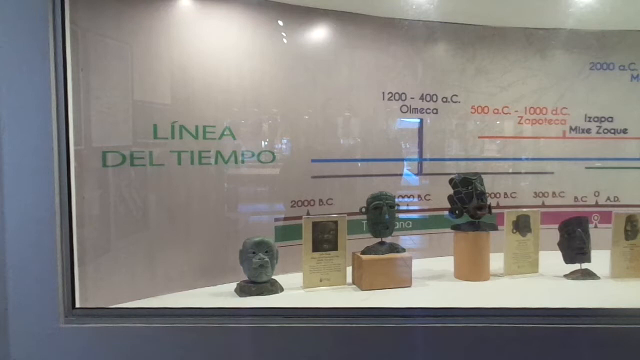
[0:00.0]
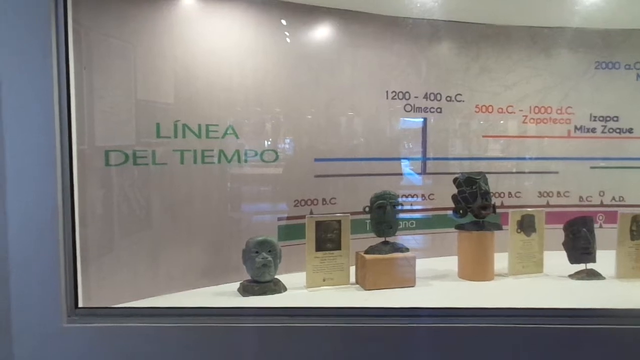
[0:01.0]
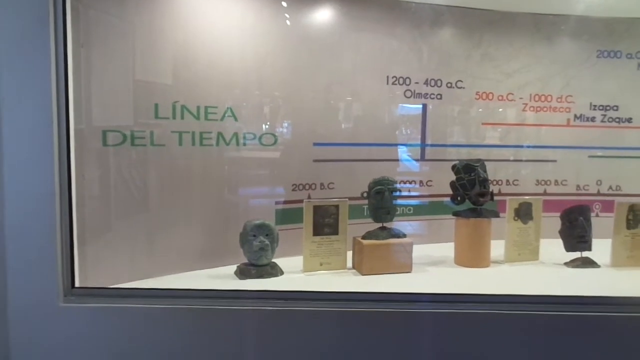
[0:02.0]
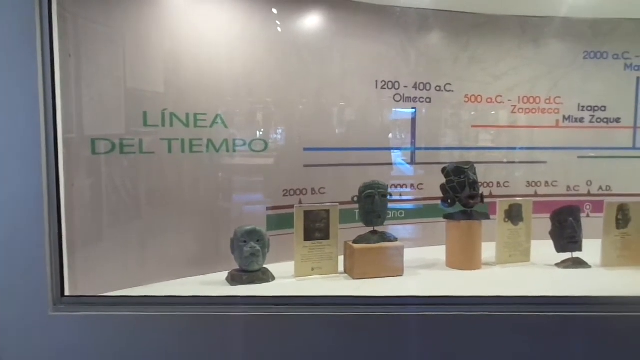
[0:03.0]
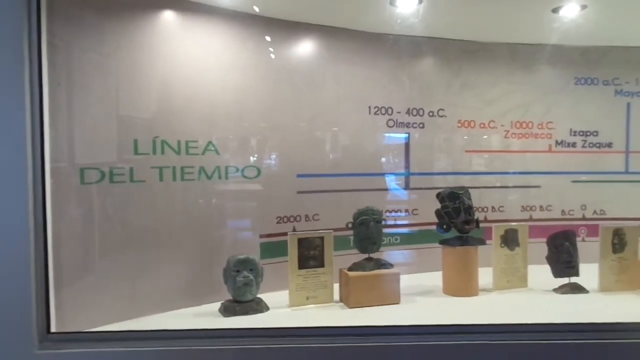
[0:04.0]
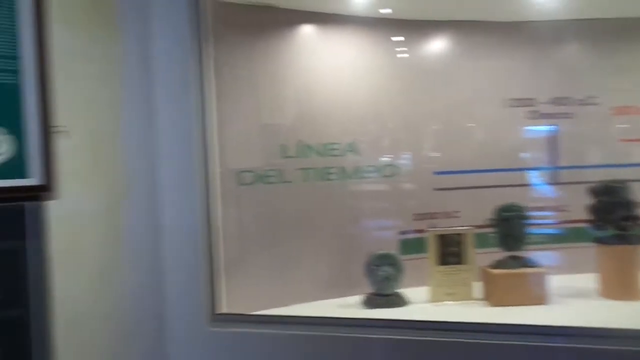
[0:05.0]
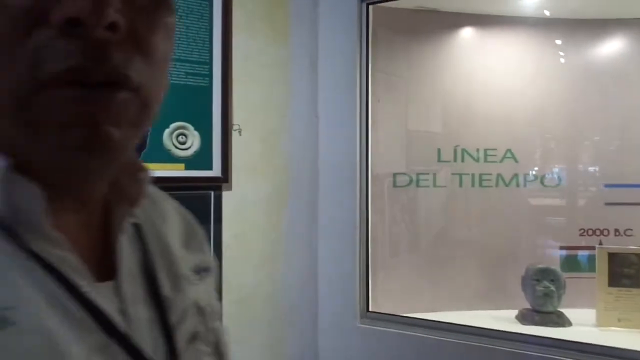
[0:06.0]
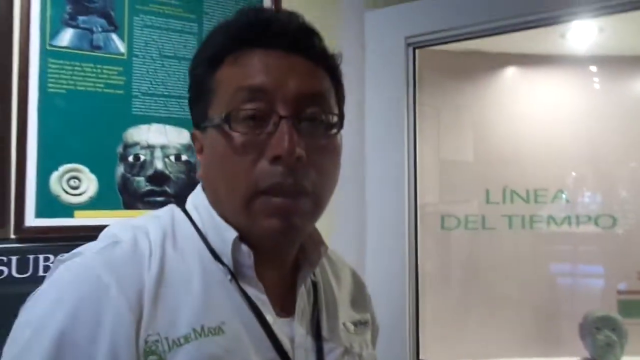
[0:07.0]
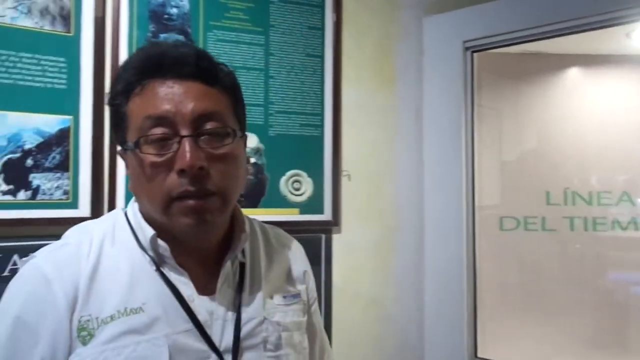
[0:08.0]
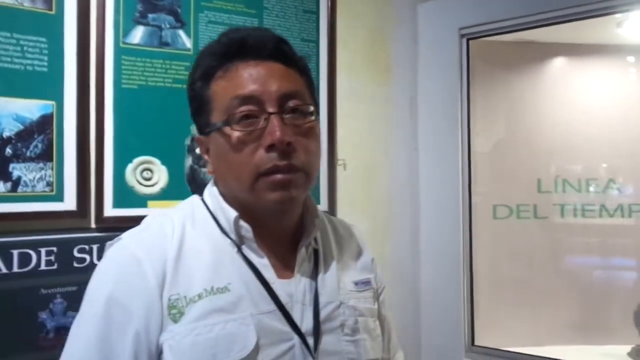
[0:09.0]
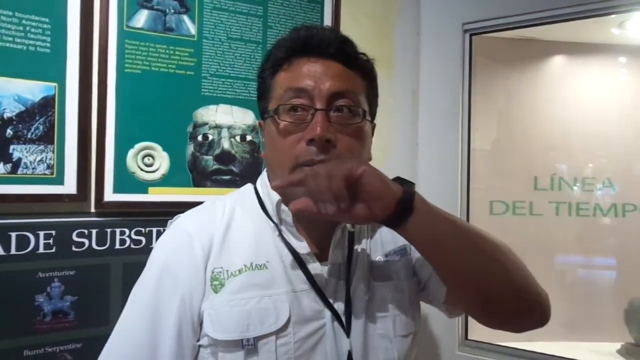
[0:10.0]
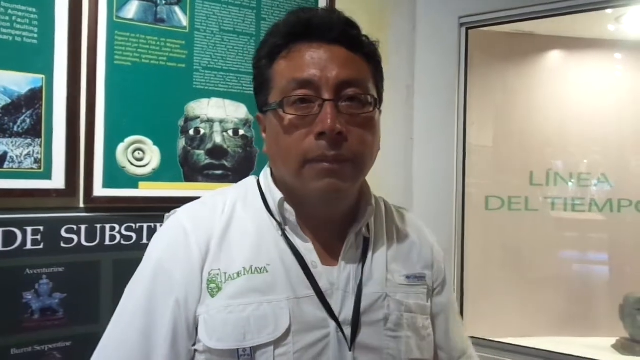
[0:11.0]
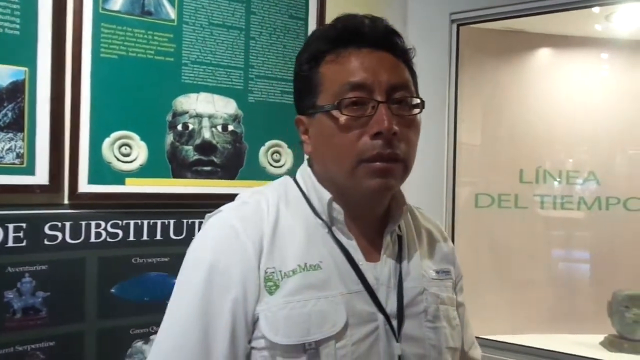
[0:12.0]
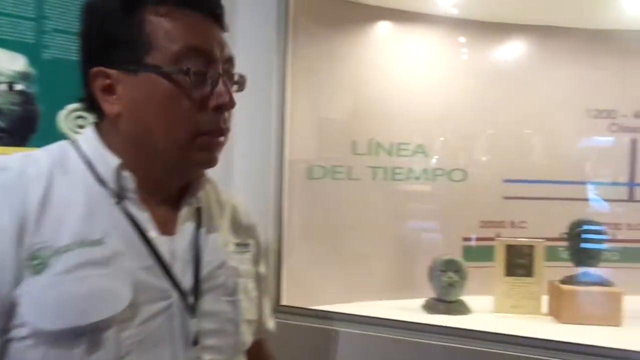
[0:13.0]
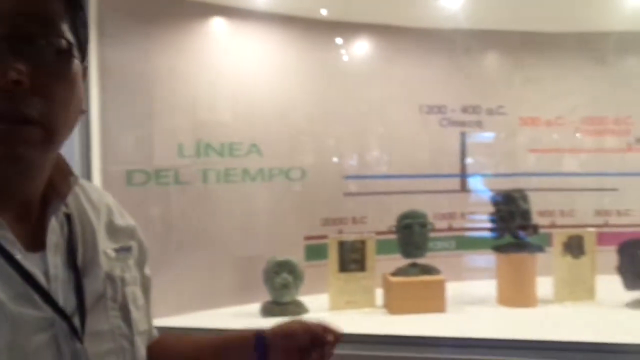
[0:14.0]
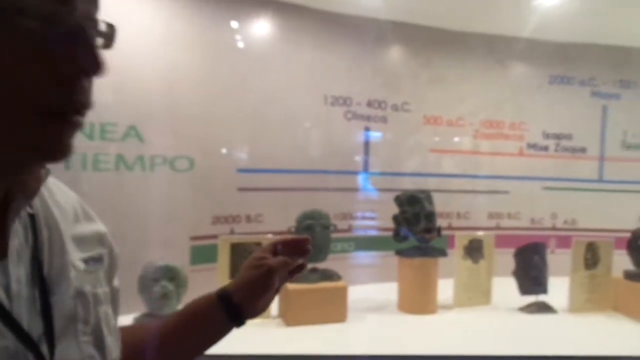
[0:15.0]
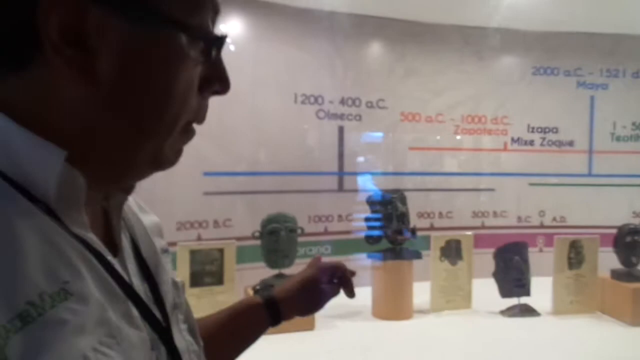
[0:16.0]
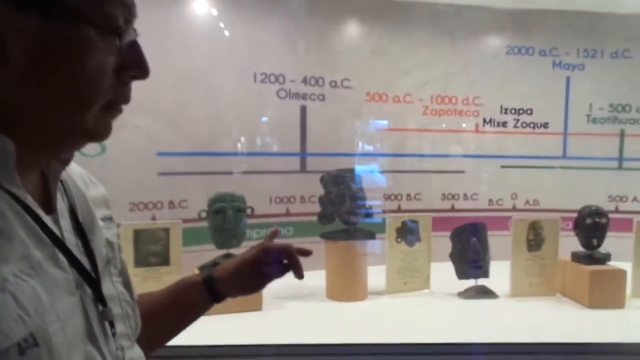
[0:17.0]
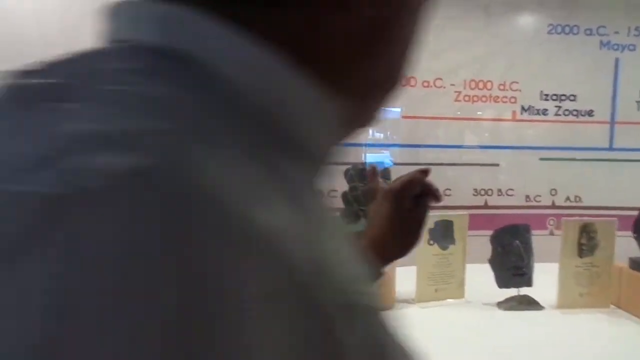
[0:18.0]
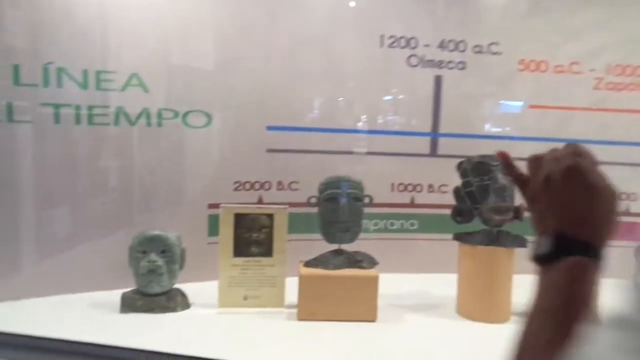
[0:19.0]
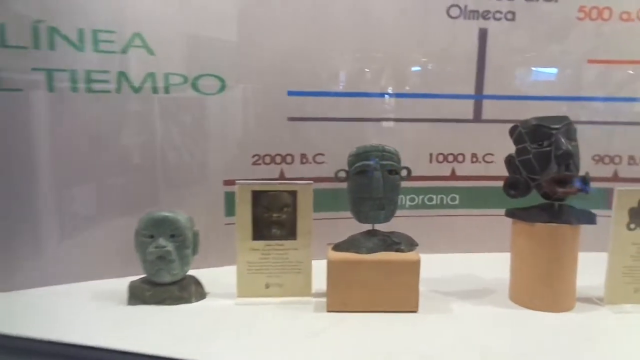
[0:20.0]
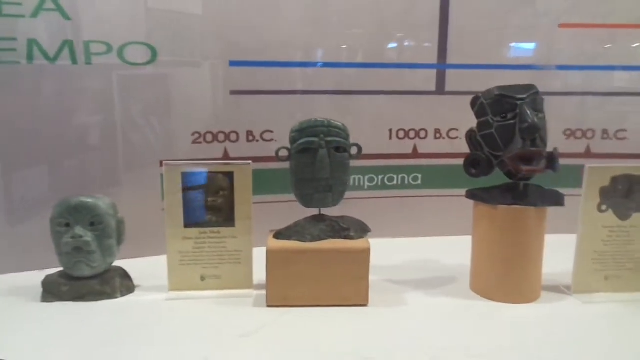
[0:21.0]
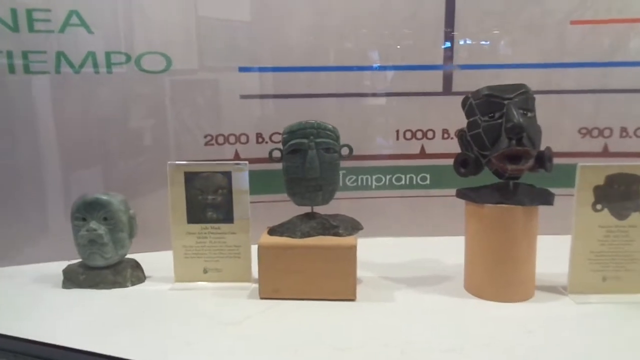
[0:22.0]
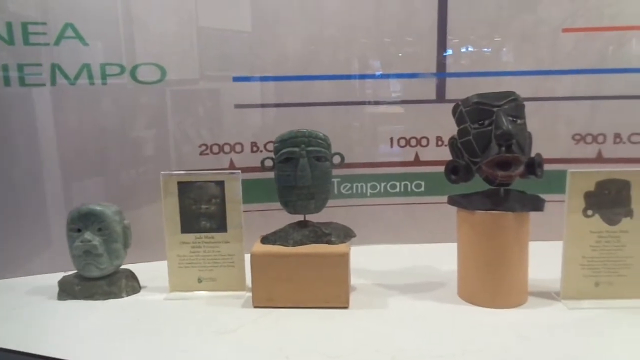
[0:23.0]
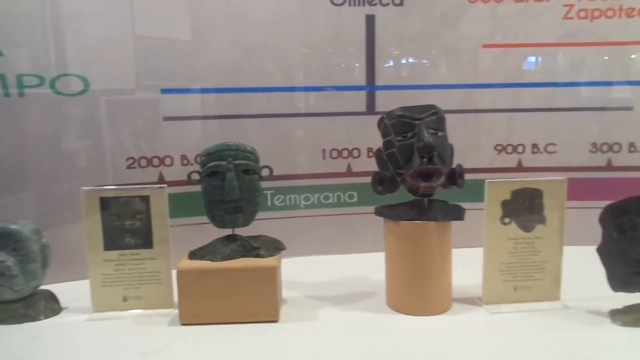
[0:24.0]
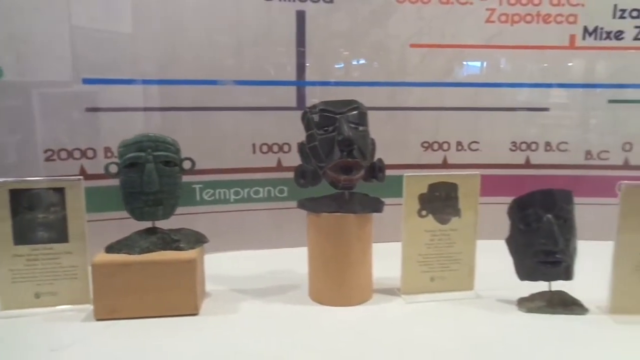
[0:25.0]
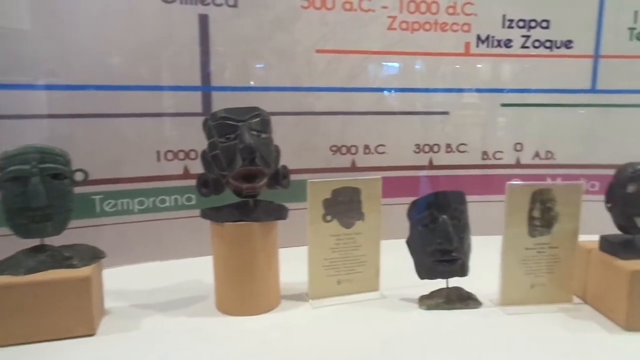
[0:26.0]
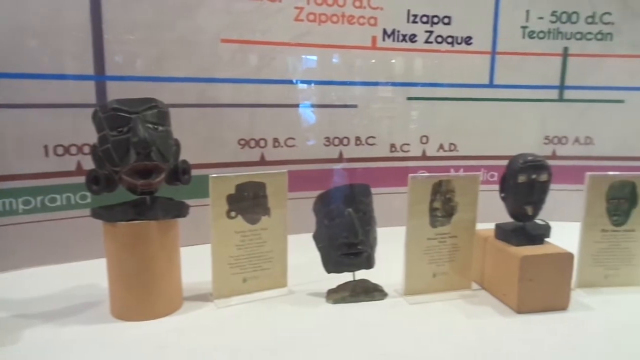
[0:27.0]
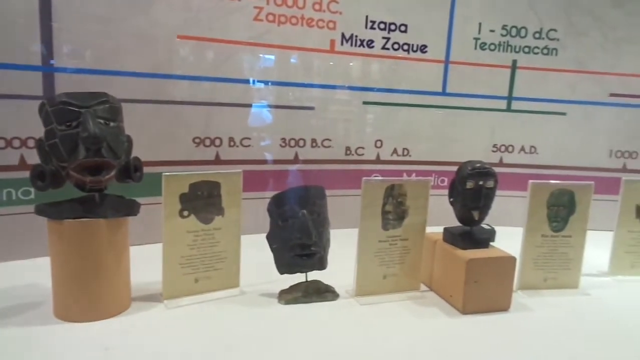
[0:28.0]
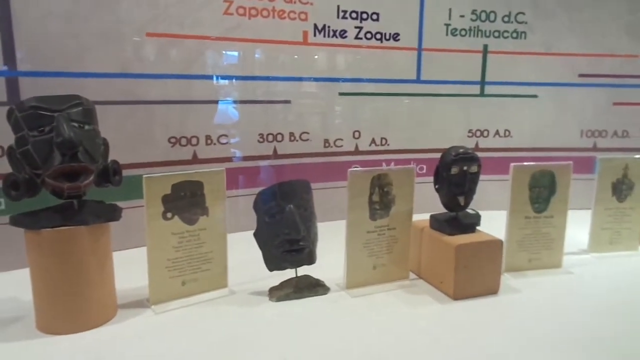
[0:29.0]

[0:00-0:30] Figurines are on display, with text possibly in different languages. One word, spelled T-I-E-M-P-O, is visible, followed by "1200 to 400" and a small "o." and "c.", which looks almost like BC, though this is uncertain. Strange figurine faces appear as the camera pans over them, and a few seem larger and labeled "TEMP PRANA" in bigger letters. The figures might possibly be Neanderthal-like. A man talks toward the camera; he appears to be Asian, with glasses, black hair, and a white shirt with green writing on it. Someone else seems to be asking him questions as he is about to explain the figurines. The wall is tan, the ceiling is white, and there is a blue wall to the left.